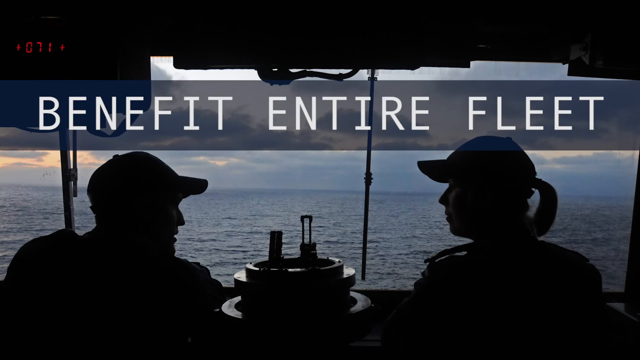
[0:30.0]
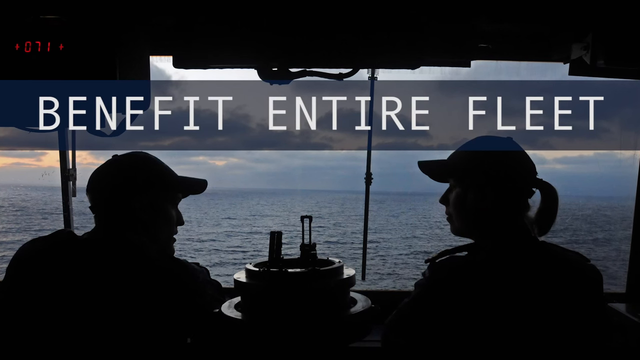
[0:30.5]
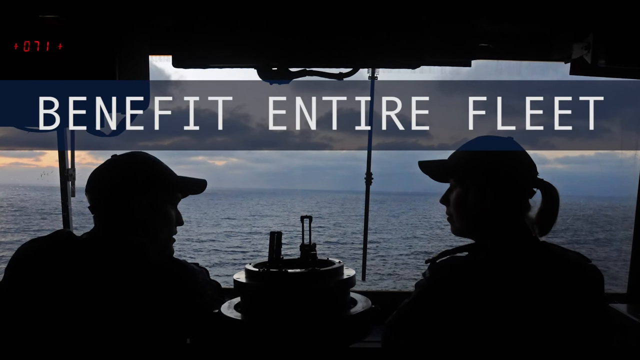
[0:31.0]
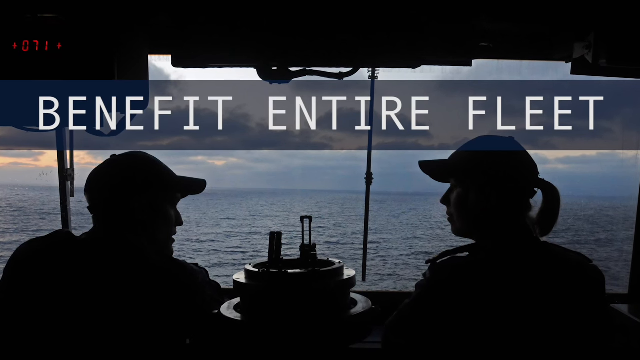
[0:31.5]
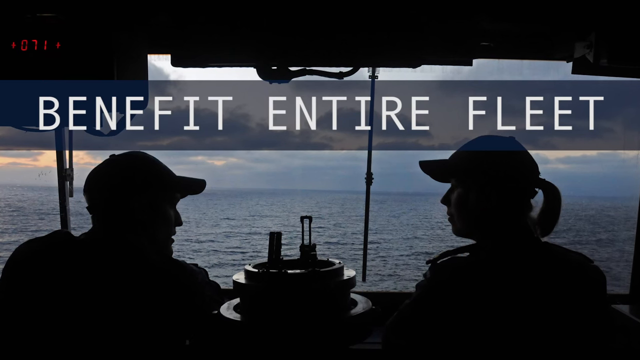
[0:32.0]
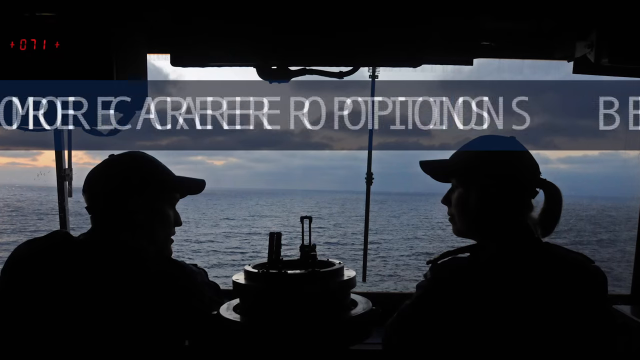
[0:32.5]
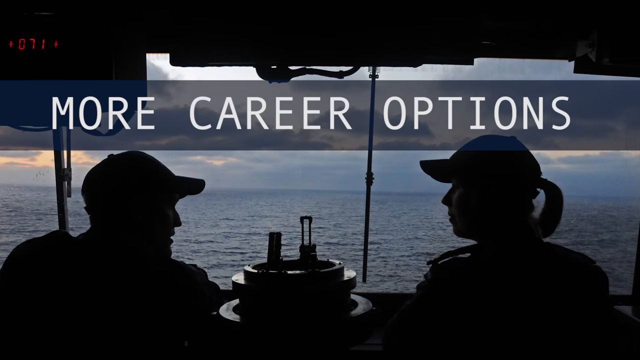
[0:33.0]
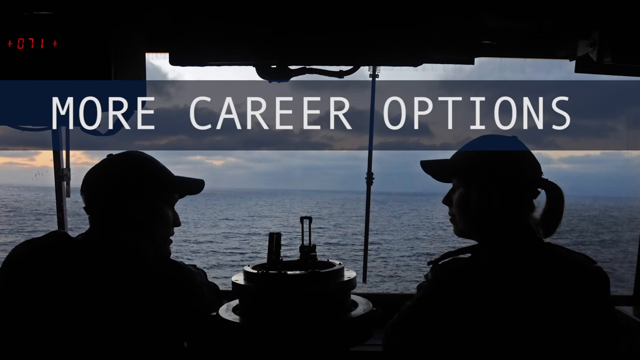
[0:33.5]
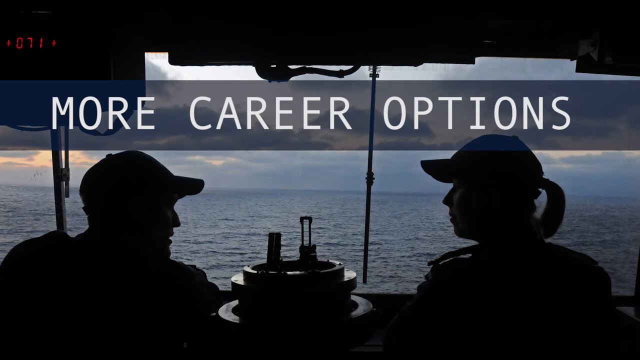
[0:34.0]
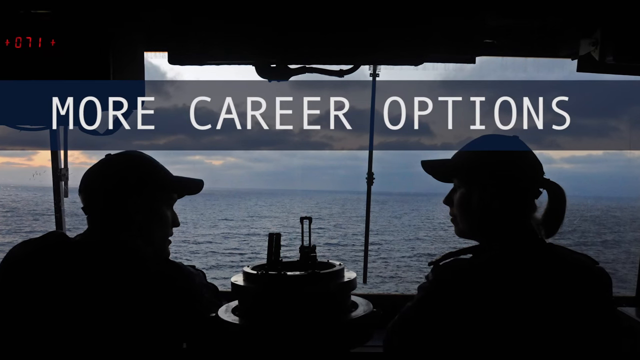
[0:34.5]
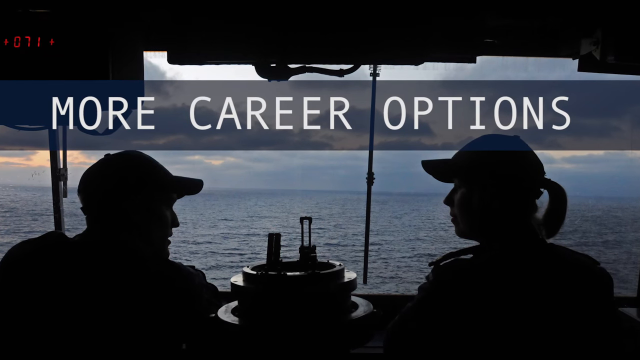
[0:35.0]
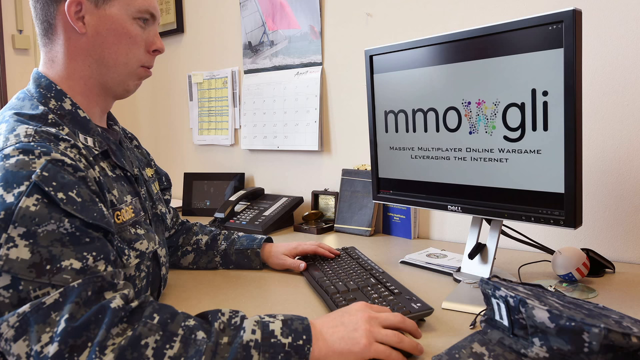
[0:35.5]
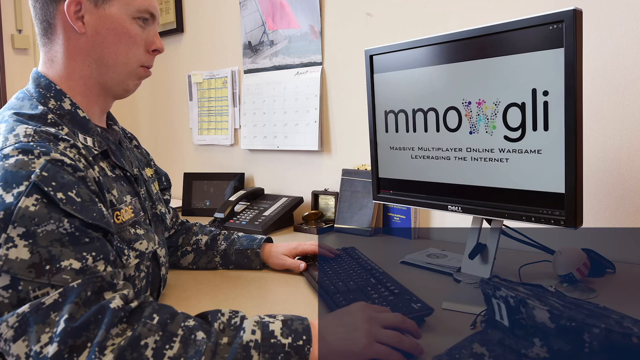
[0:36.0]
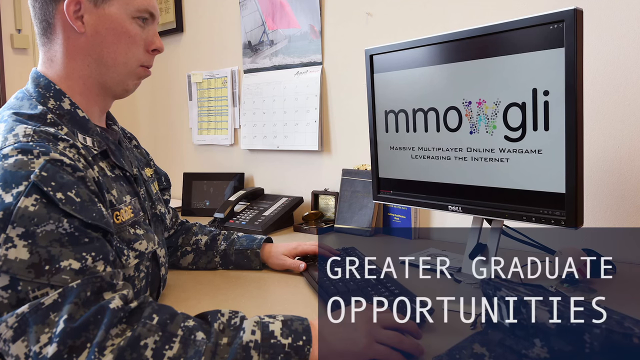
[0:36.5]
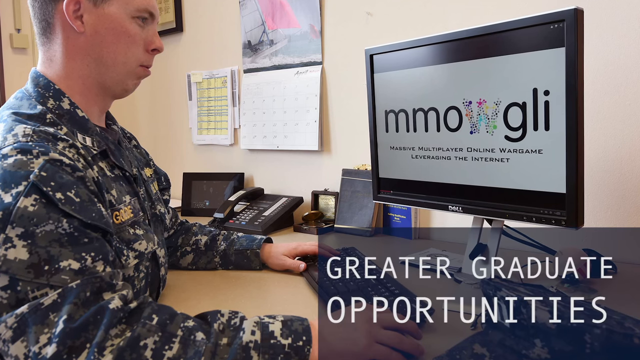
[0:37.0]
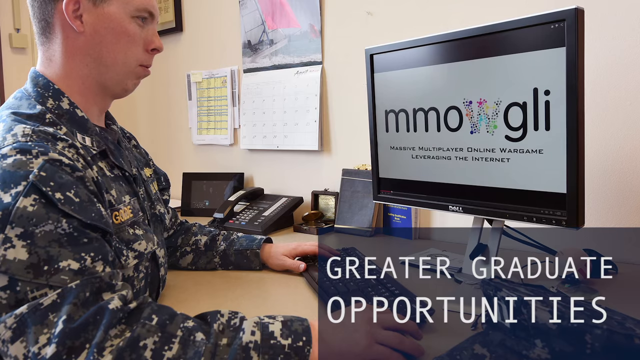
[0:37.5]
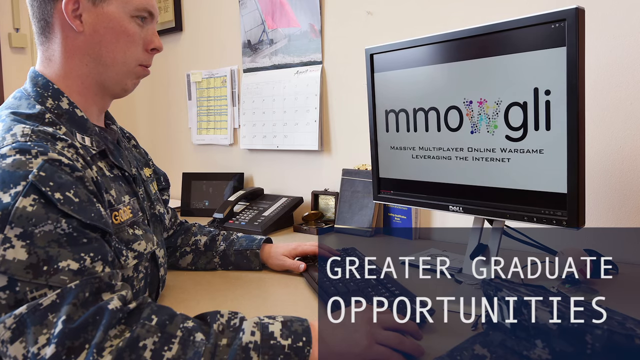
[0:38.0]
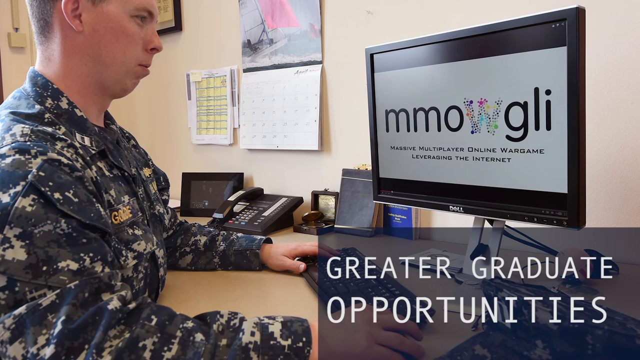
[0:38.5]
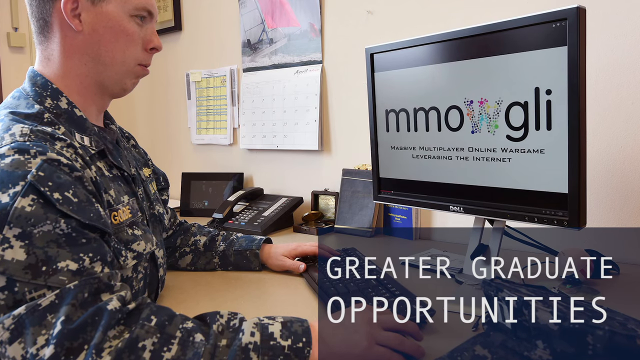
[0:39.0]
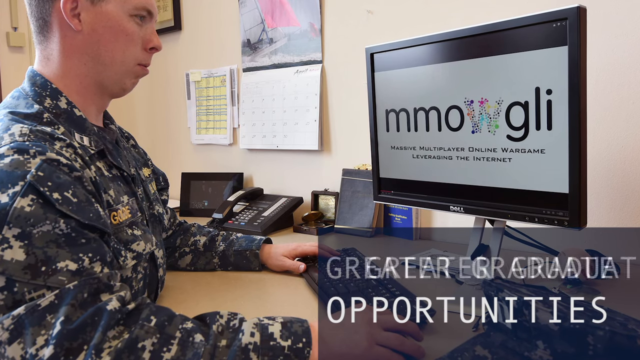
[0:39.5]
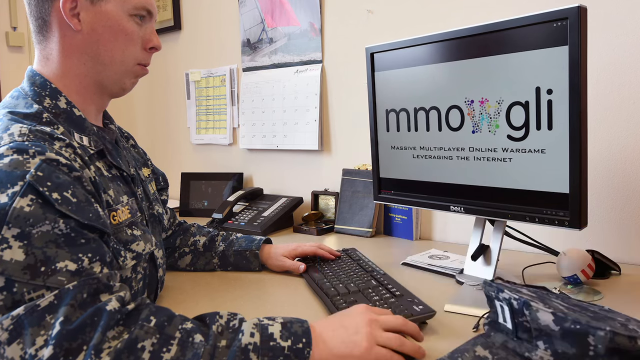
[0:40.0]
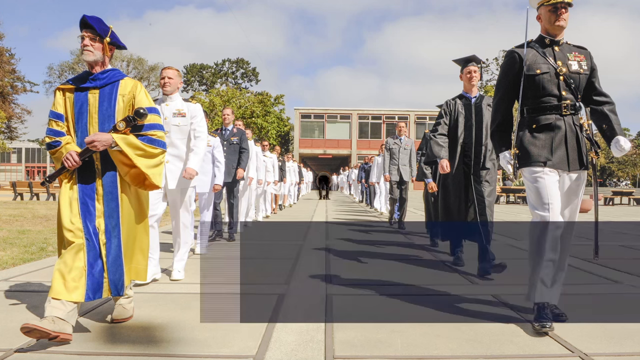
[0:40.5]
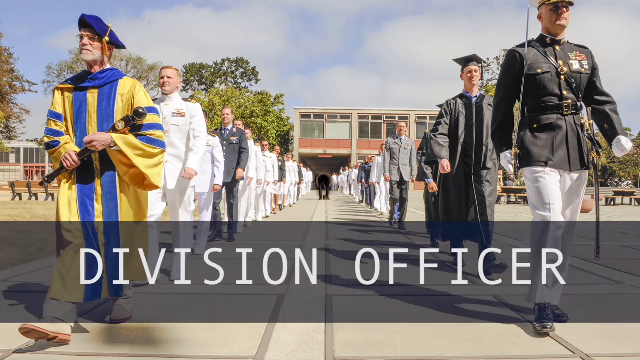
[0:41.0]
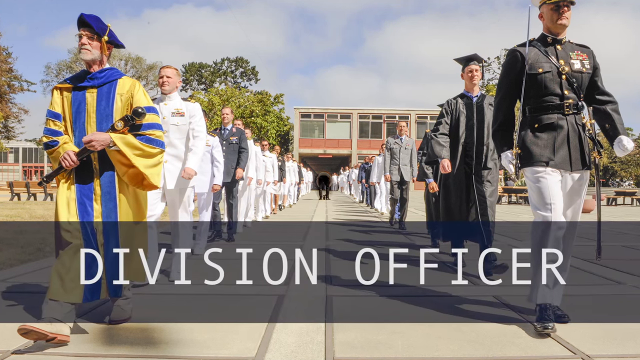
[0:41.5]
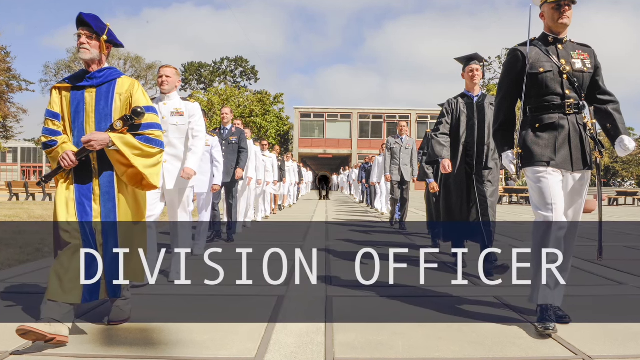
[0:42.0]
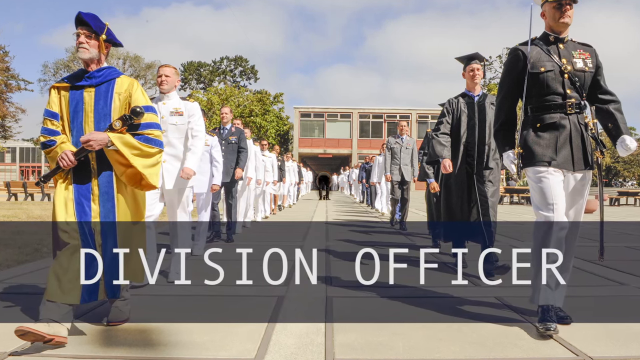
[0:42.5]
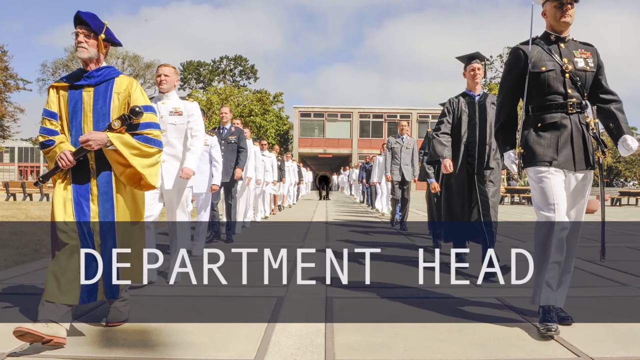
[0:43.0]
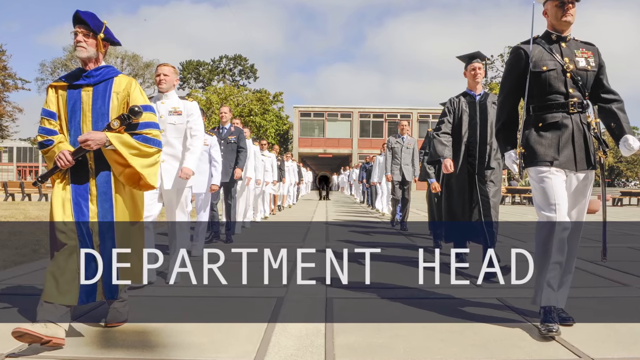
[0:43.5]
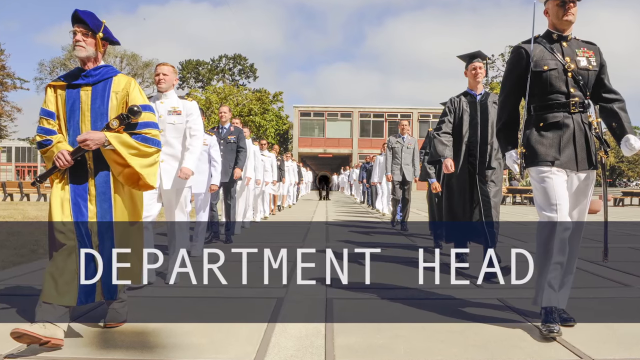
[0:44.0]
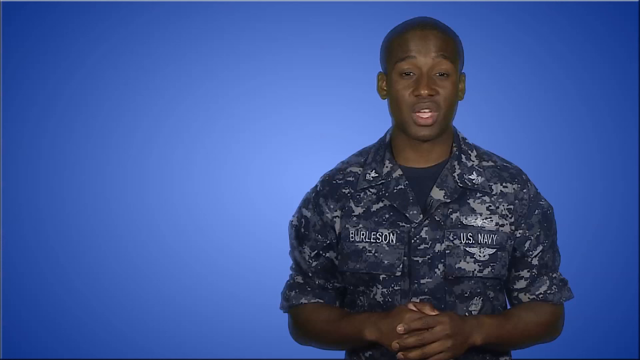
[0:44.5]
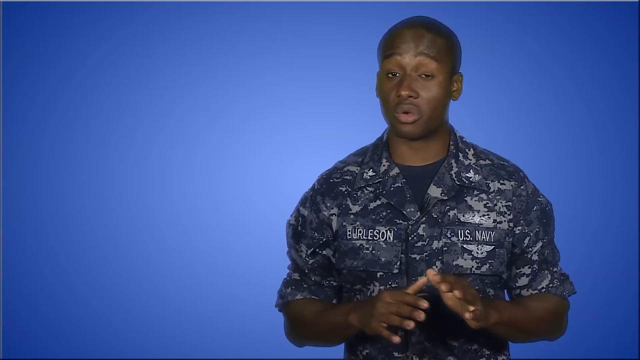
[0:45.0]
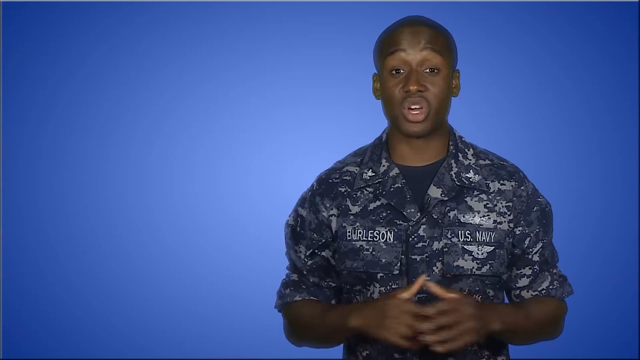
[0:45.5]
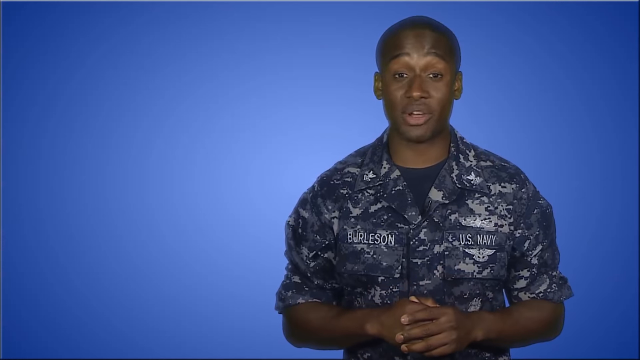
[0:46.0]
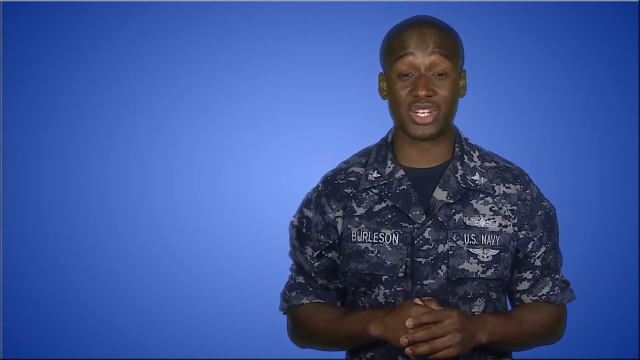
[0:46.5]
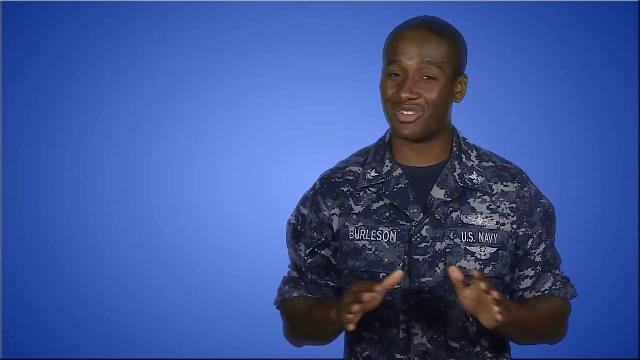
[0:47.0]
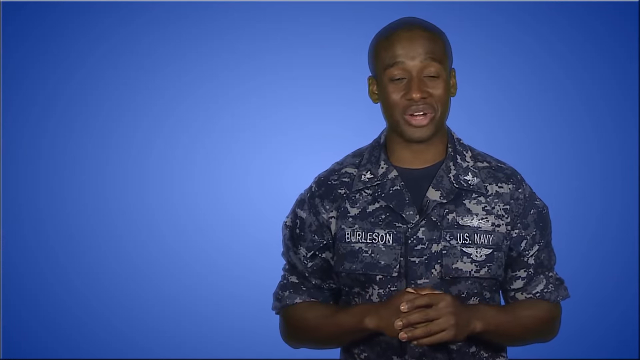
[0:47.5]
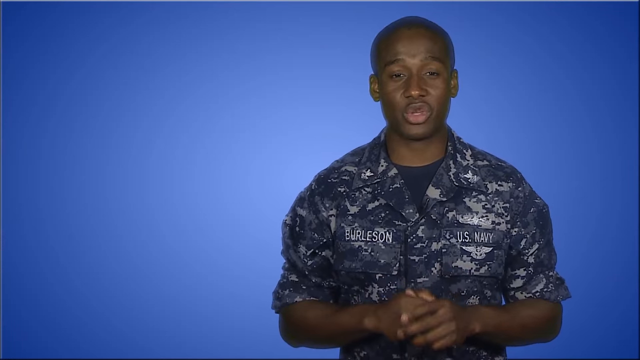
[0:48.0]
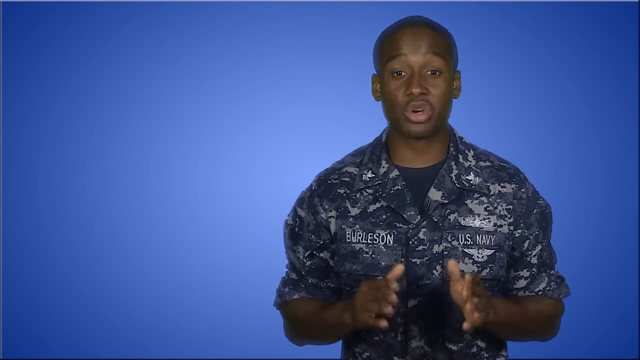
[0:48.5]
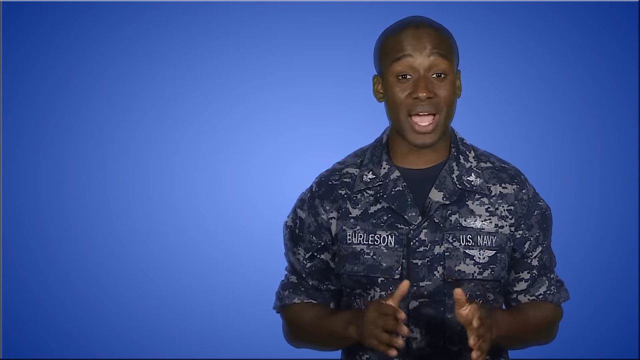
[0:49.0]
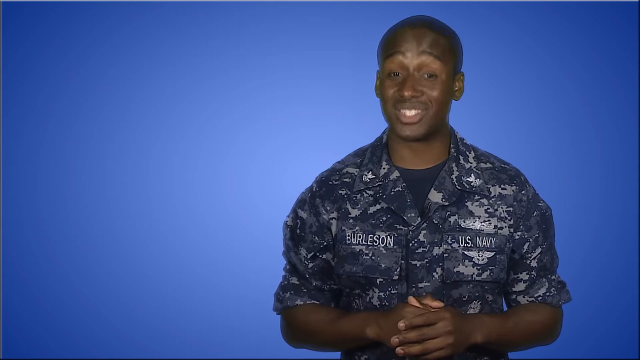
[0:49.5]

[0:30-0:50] An image shows what looks like a man and a woman standing near the side of a boat, with a lot of water in front of them; it is somewhat dark, so they appear as black silhouettes looking at each other, both wearing caps. At the top of the screen it says "more career options." Next comes a still image of what looks like a Navy officer in black, gray and white fatigues sitting at a desk, working on a computer. The screen appears to have a white background with "M-M-O-W-G-L-I" in large letters and, underneath, "Massive Multiplayer Online War Game Leveraging the Internet"; in the bottom right-hand corner of the image it says "Greater Graduate Opportunities." Then an image of what looks like a graduation ceremony appears: in front of a large building, on what seems to be a sidewalk or path, are two lines of men mostly wearing white military uniforms, some in black uniforms and some in black caps and gowns, with a man at the front in what looks like a yellow gown with blue stripes. Text at the bottom of the screen reads "division officer," then changes to "department head." The video then shows a young Black Navy officer with a very short buzz cut standing in front of a large blue screen, seen from the waist up to the top of his head. Over his right chest it says "Burleson" and over his left chest "US Navy," and he wears black, gray and white fatigues. He speaks to the camera, sticking his hands out in front of him and then clasping them in front of his stomach.